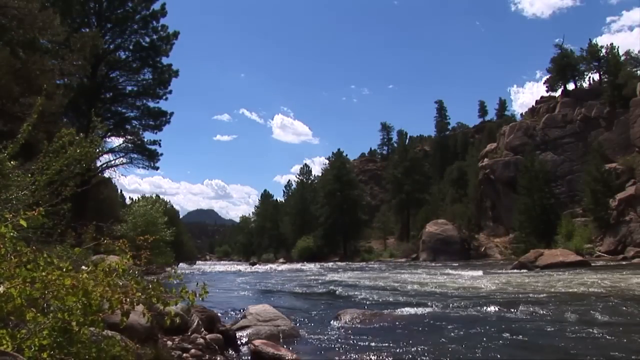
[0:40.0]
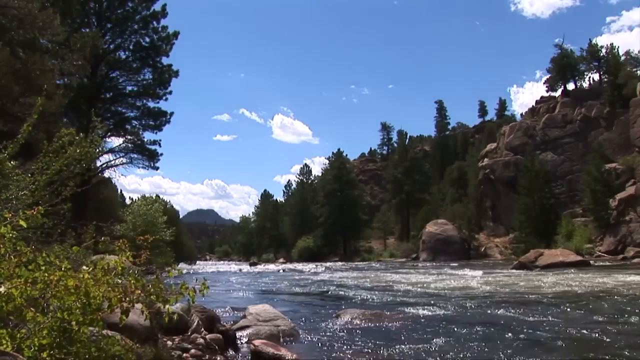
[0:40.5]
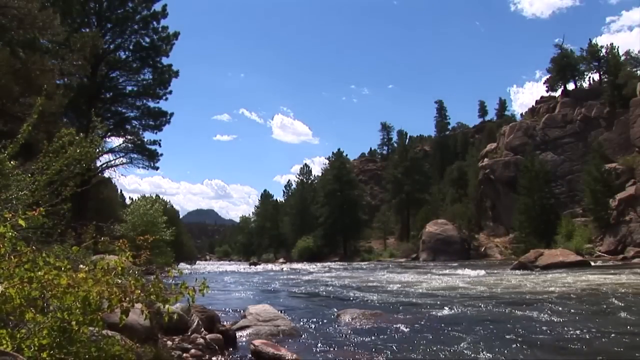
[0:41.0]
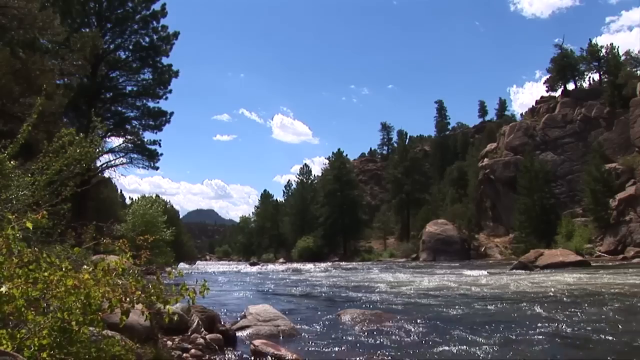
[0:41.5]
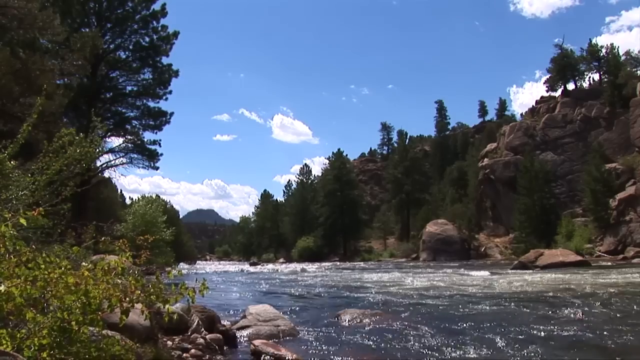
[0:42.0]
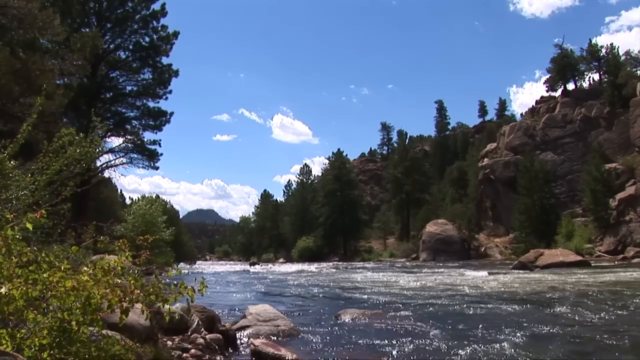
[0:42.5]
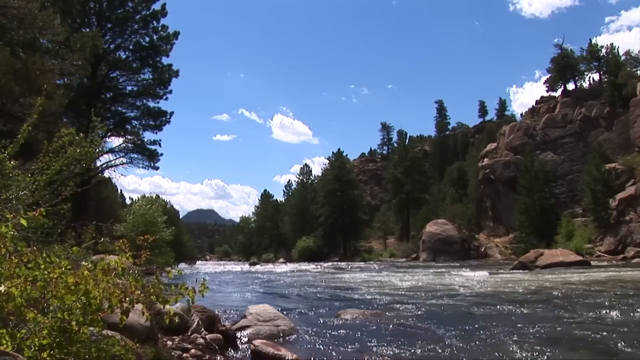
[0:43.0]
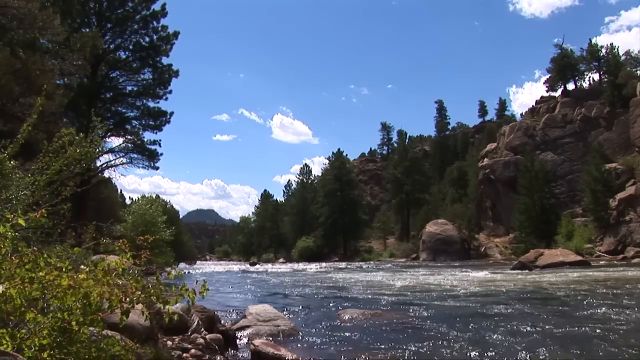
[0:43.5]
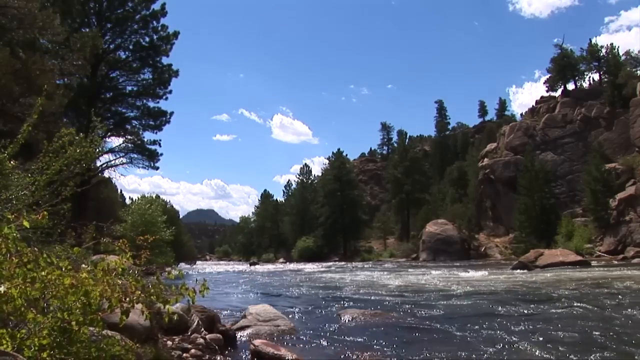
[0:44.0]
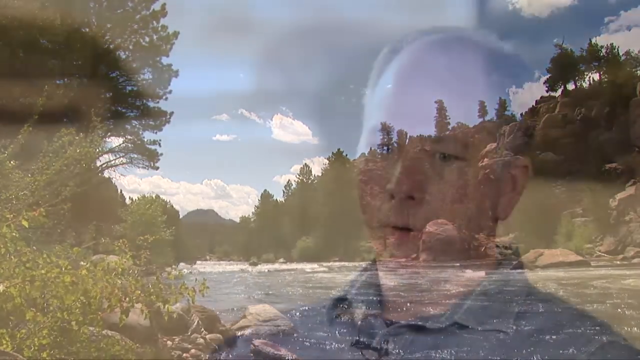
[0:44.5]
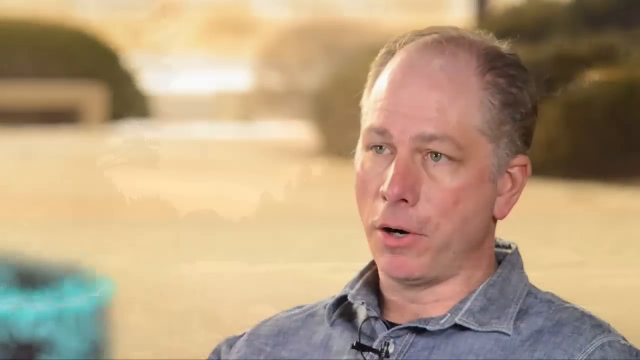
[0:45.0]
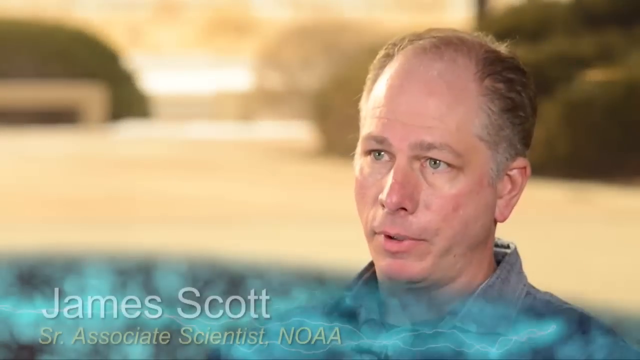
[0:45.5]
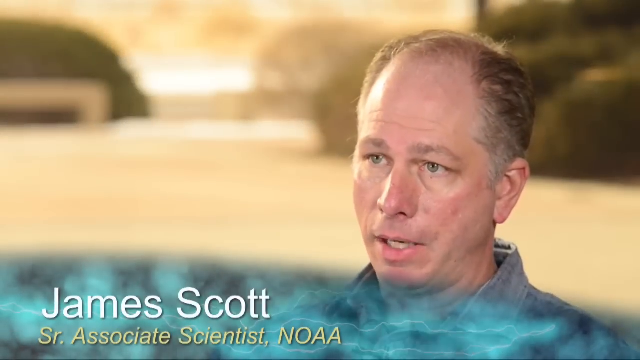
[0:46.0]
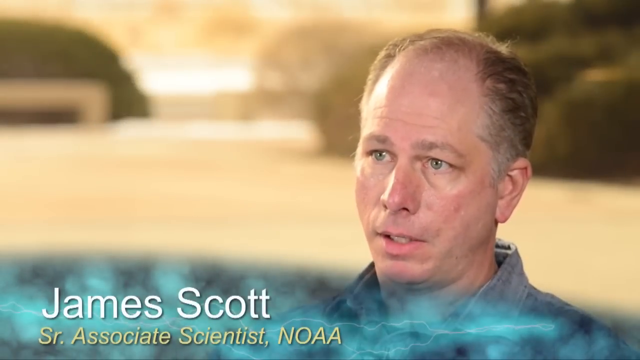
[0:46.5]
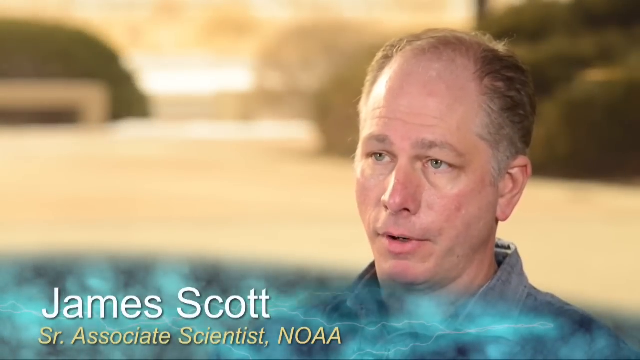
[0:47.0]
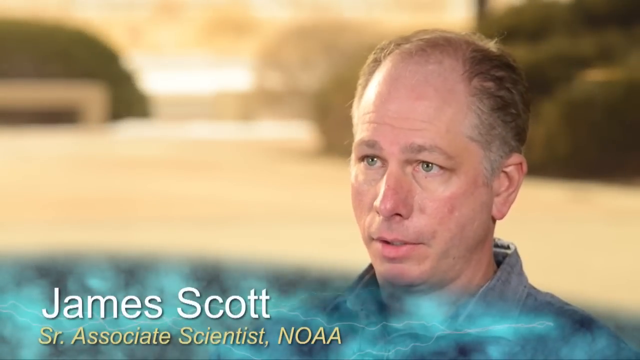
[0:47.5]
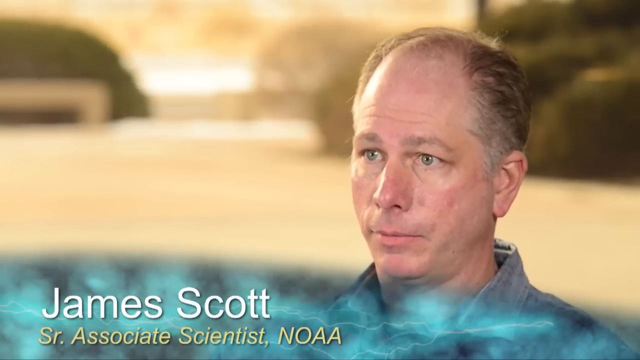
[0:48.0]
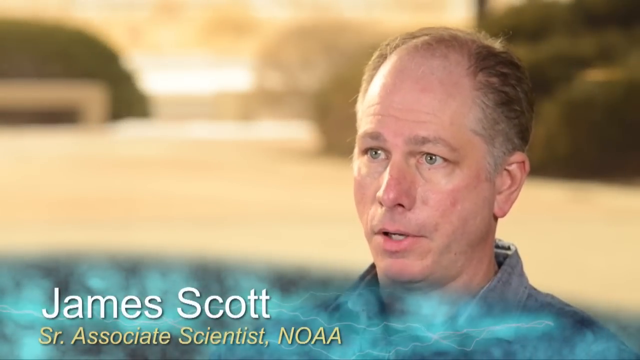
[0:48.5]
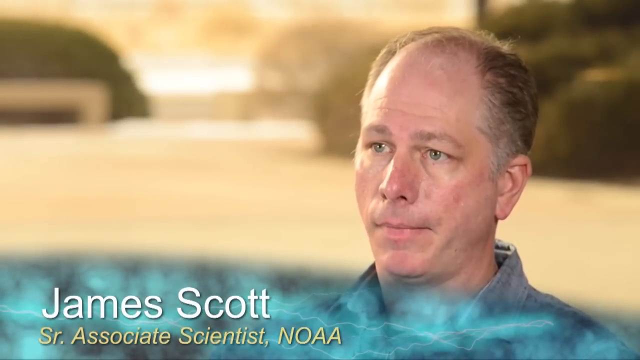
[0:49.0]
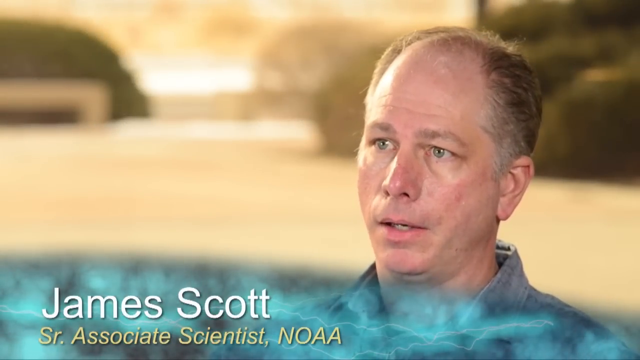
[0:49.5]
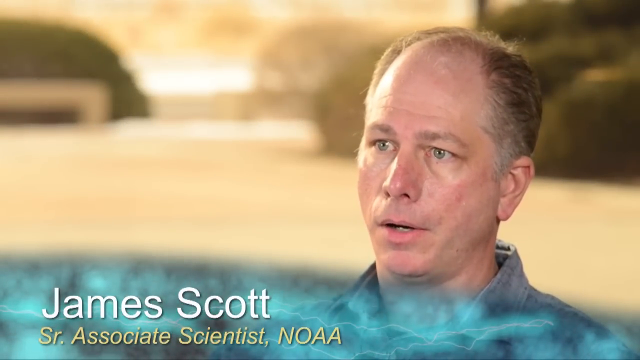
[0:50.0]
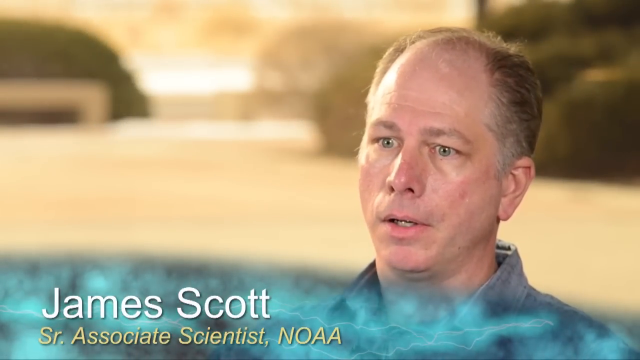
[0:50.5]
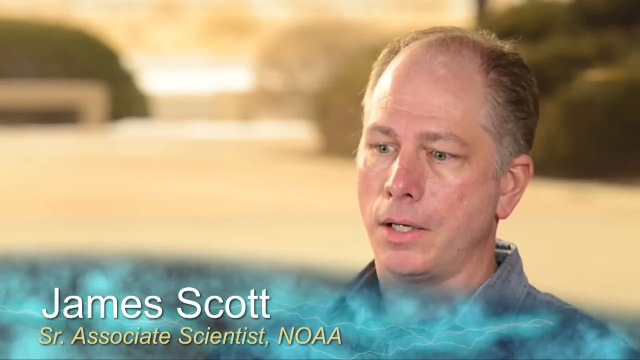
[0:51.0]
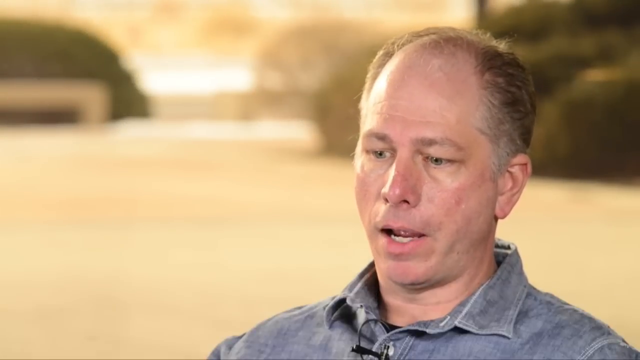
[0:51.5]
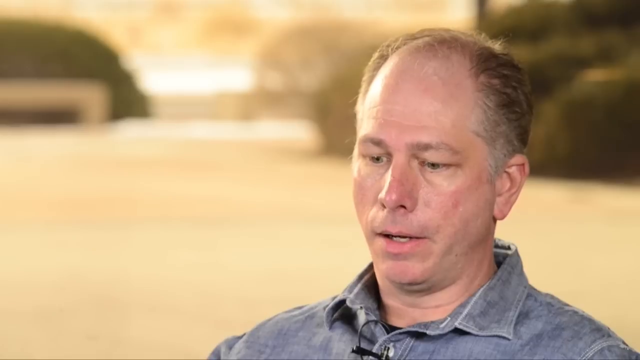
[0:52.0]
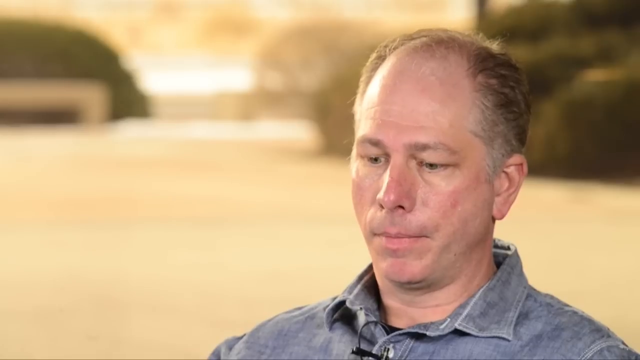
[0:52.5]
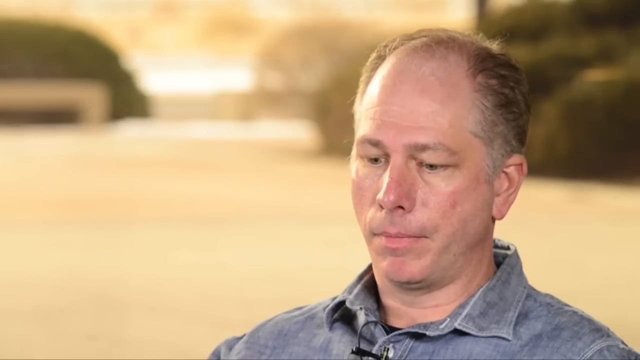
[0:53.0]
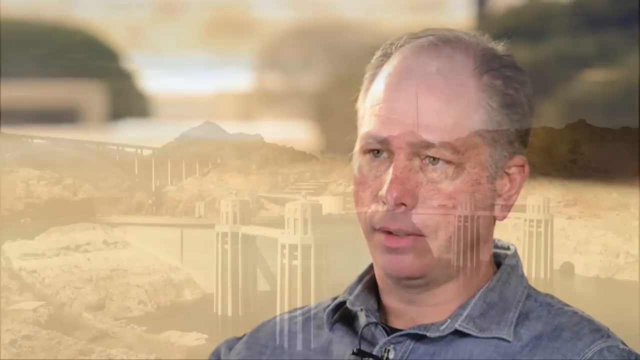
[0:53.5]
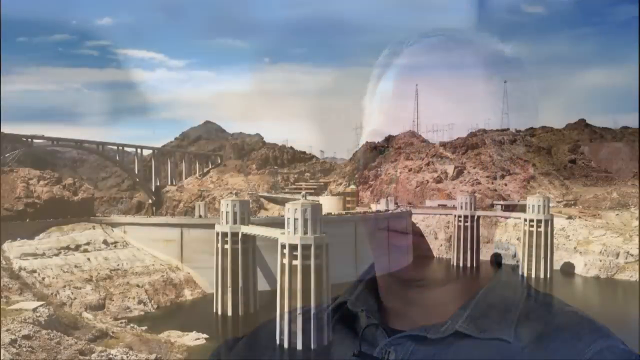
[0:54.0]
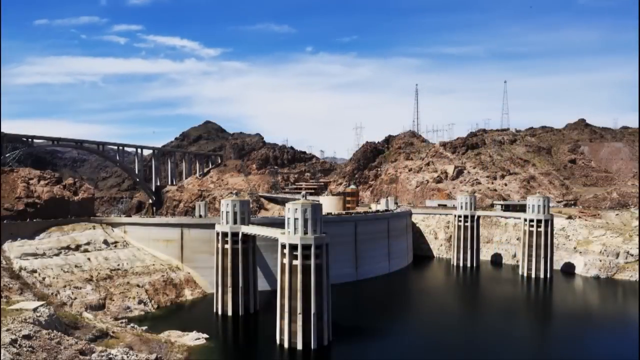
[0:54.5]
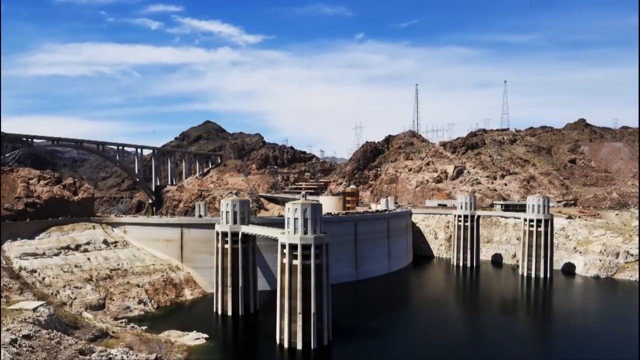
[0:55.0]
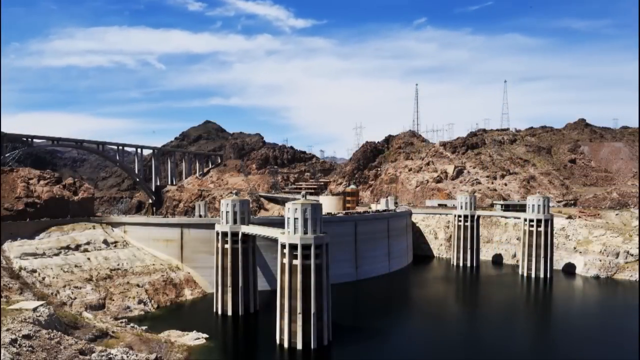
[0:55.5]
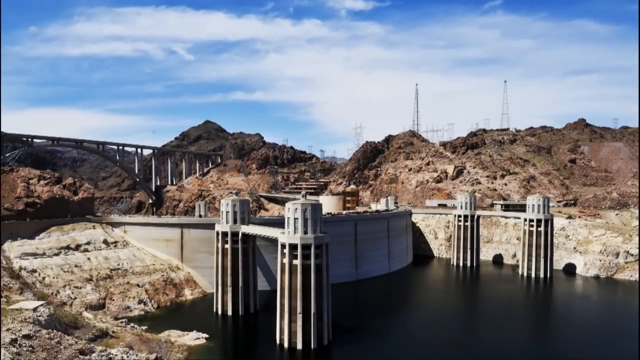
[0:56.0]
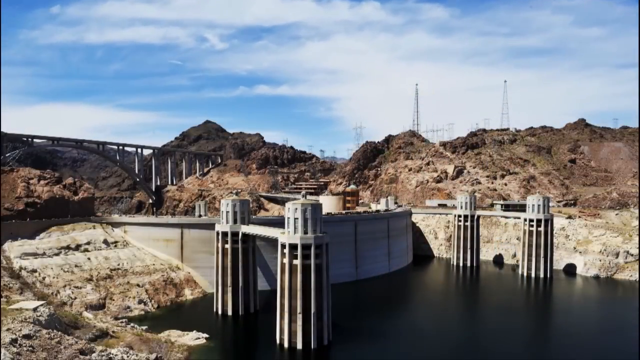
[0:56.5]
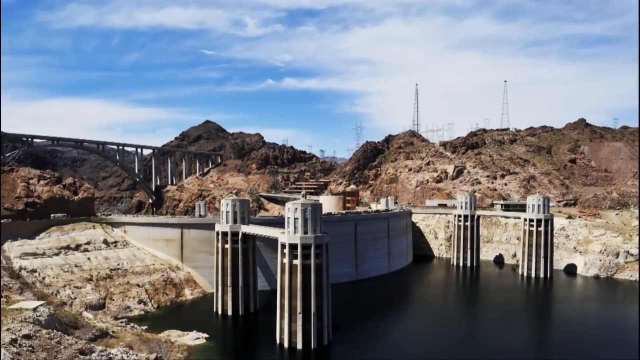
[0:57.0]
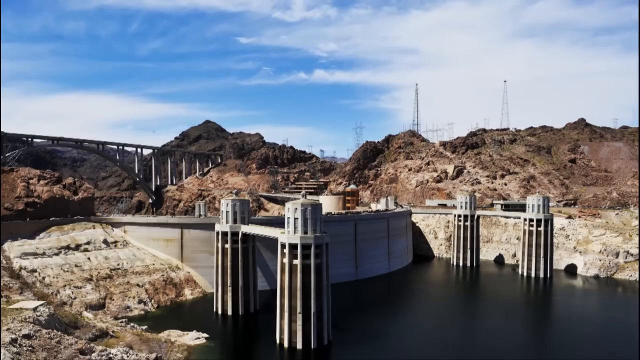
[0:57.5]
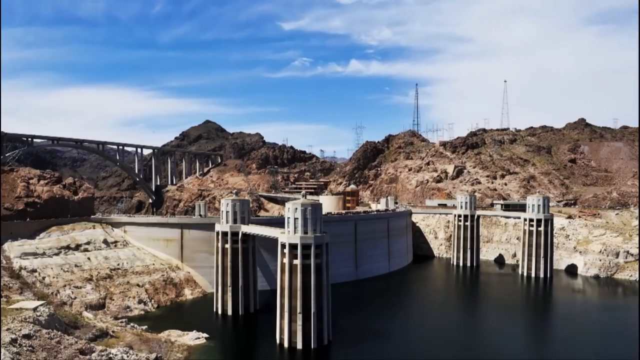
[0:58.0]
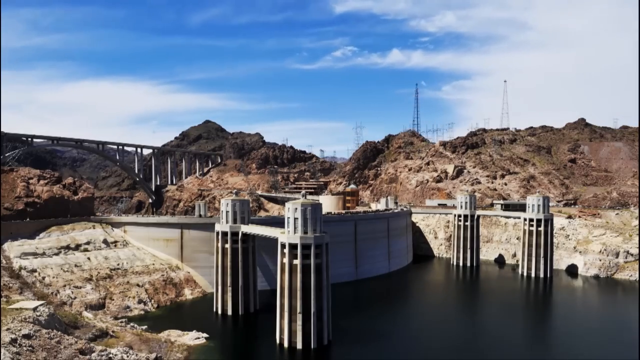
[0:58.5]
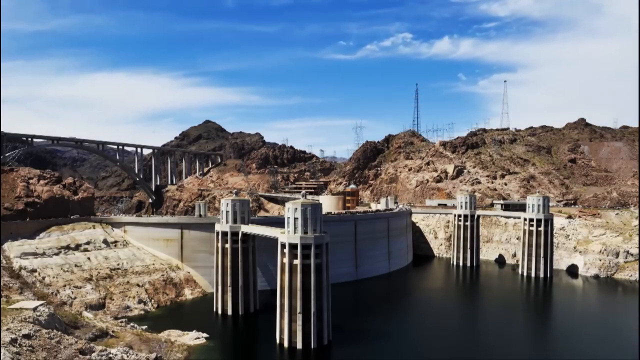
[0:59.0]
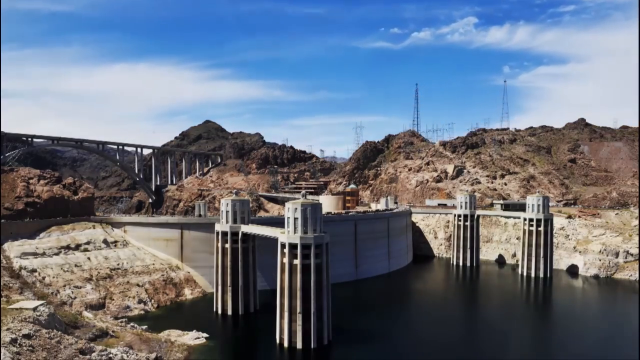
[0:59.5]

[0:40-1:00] A large river runs through the centre of some countryside. On either side are very high cliffs covered in green shrubs and foliage, and large trees grow along the side of the river. There are large rocks and boulders in the water and some very small white rapids. The sky is blue with some small white clouds drifting across. The river runs from the right-hand side of the screen to the left-hand side. A man called James Scott then talks to the camera; he is a white man, slightly balding, wearing a light blue shirt. Next, a large dam spans the whole of a river, with four large columns joined together by walkways. In the background there is a large arched bridge with lots of cars going across it, and pylons going across the mountain range, under clouds and blue sky.